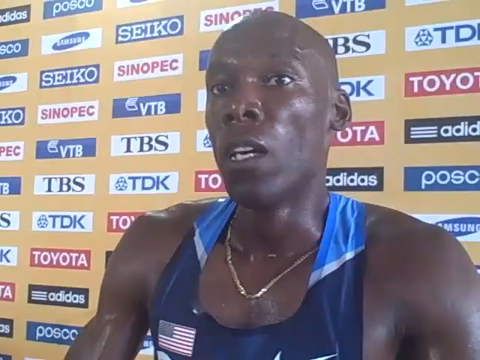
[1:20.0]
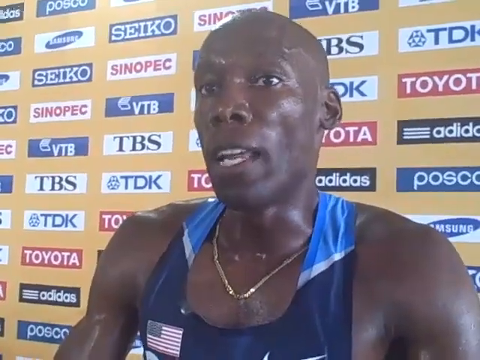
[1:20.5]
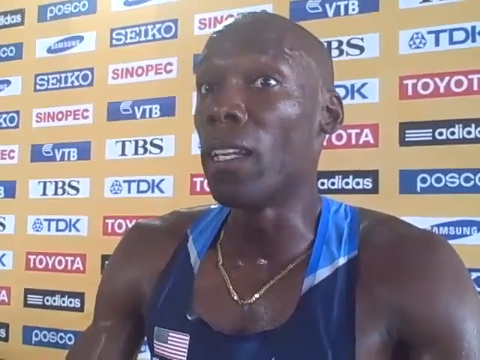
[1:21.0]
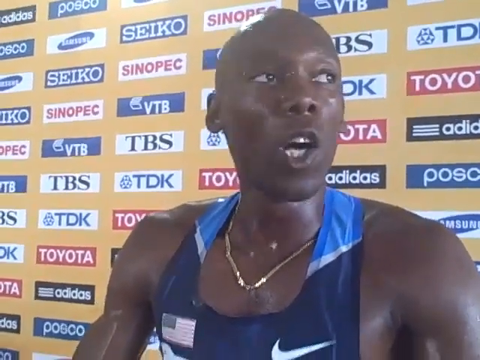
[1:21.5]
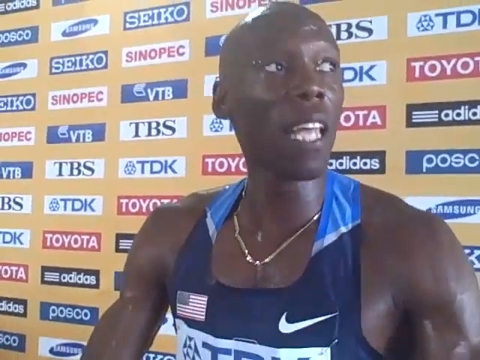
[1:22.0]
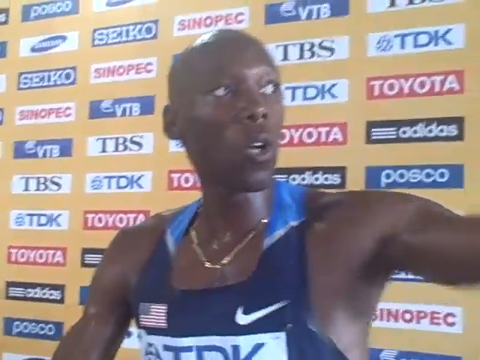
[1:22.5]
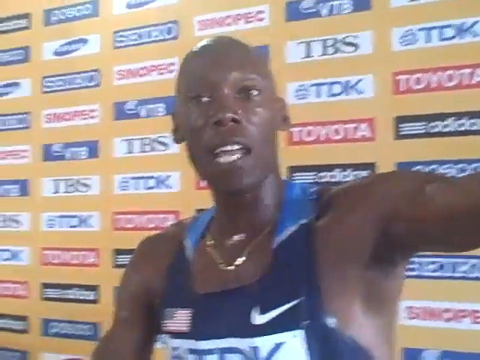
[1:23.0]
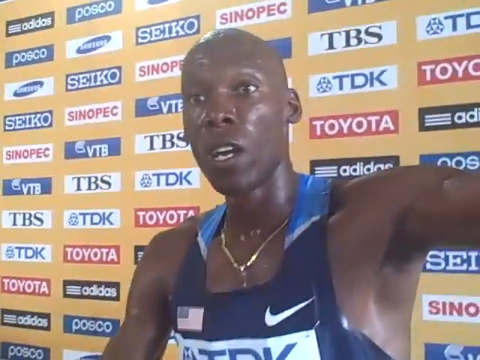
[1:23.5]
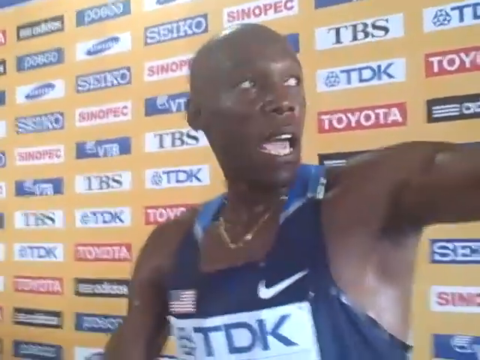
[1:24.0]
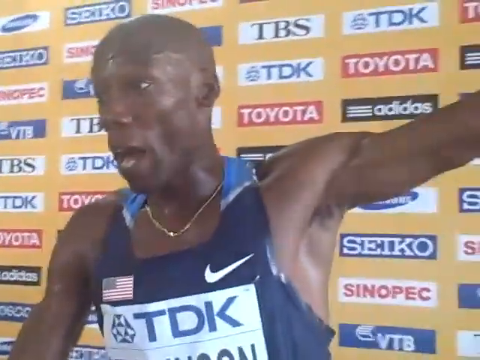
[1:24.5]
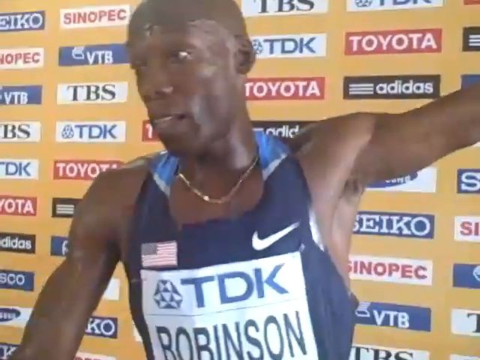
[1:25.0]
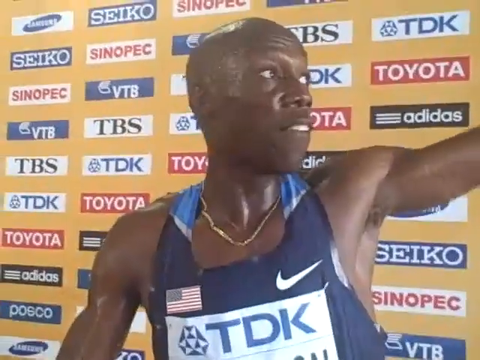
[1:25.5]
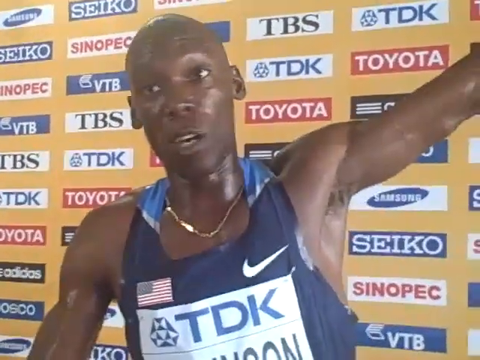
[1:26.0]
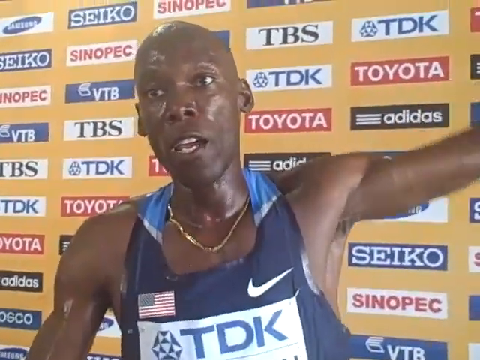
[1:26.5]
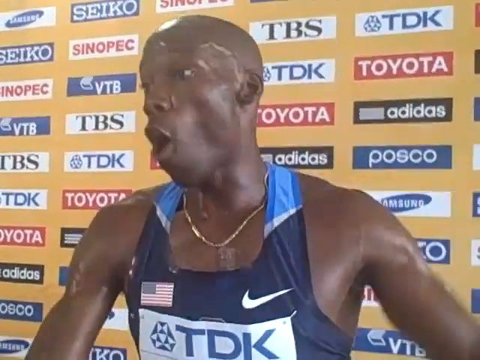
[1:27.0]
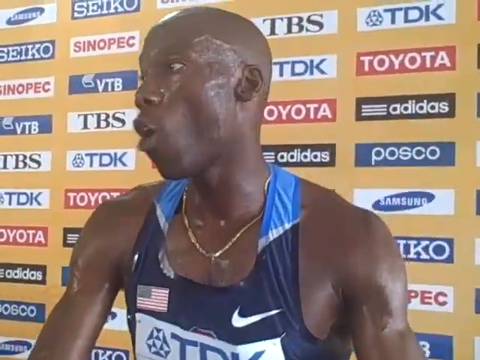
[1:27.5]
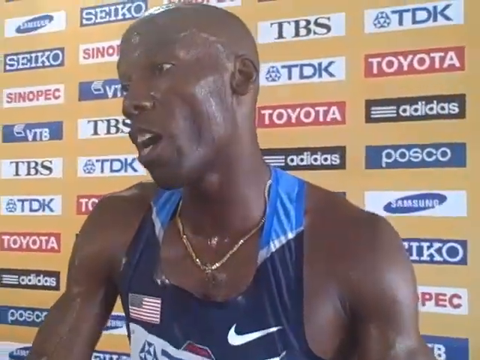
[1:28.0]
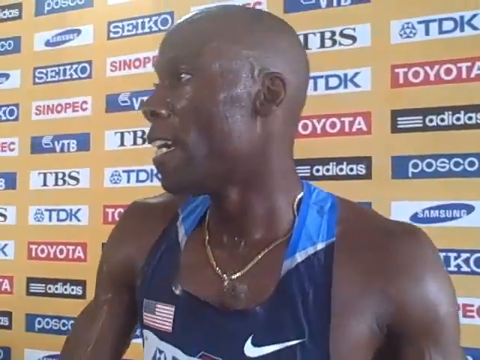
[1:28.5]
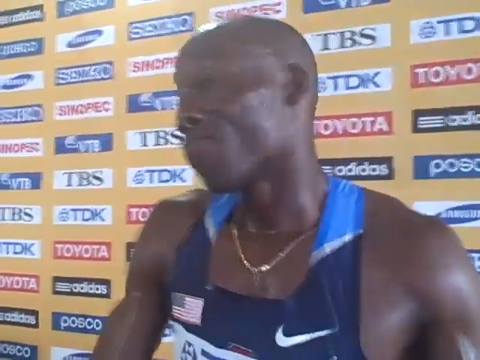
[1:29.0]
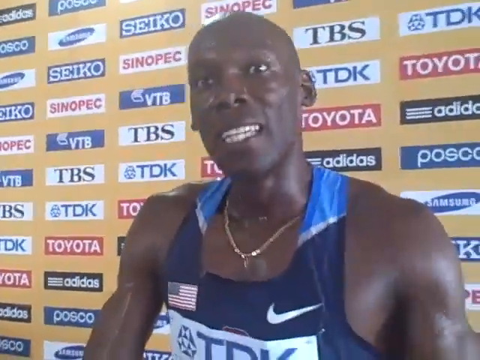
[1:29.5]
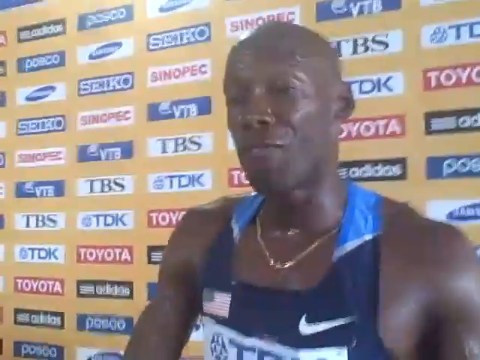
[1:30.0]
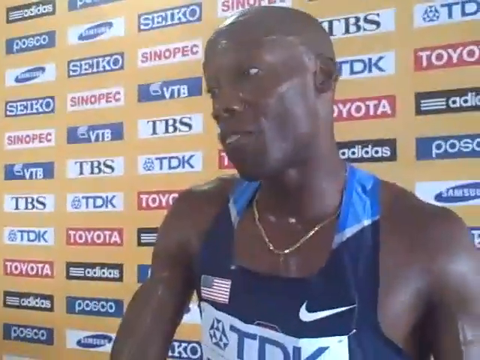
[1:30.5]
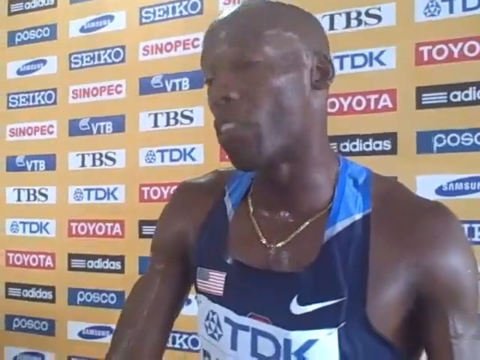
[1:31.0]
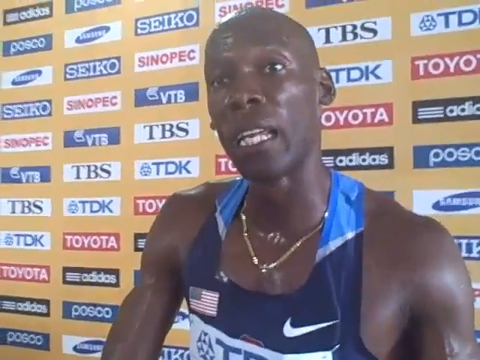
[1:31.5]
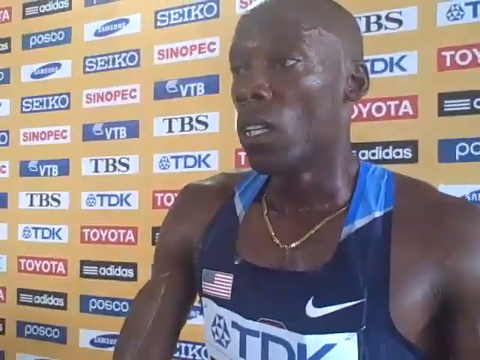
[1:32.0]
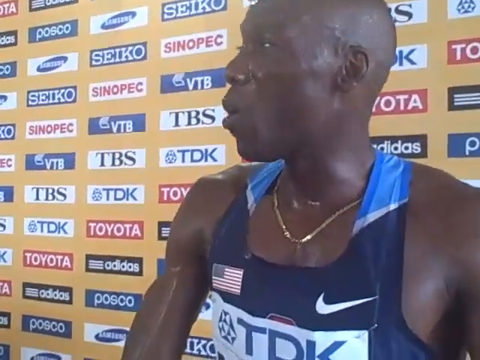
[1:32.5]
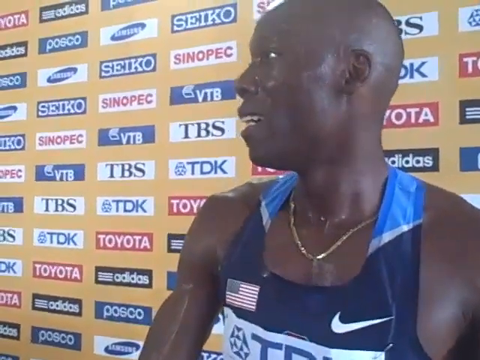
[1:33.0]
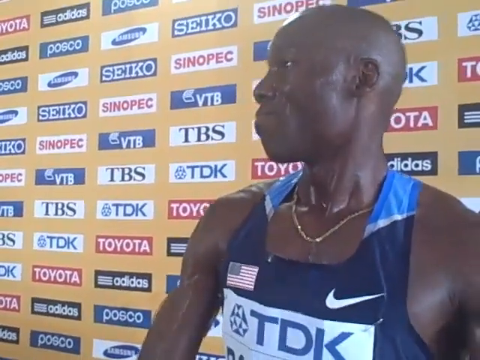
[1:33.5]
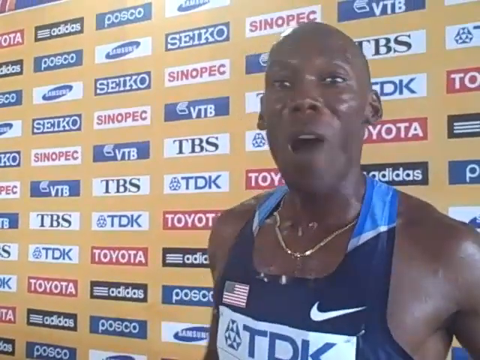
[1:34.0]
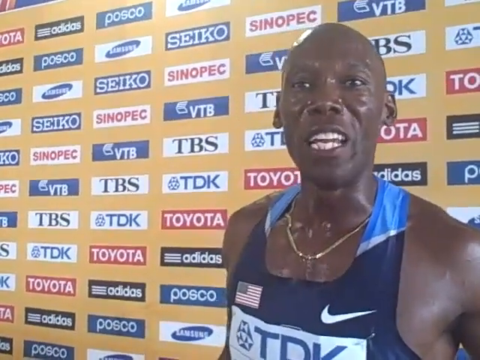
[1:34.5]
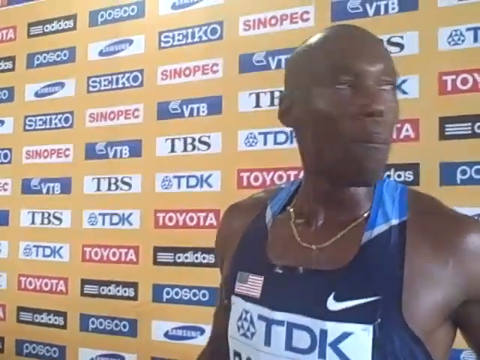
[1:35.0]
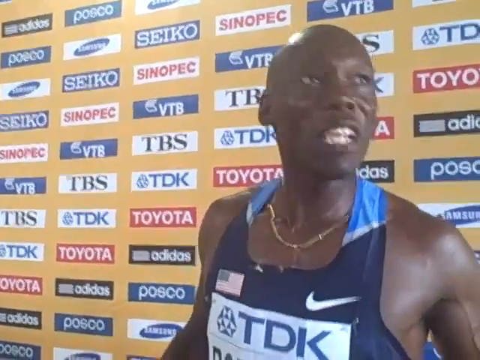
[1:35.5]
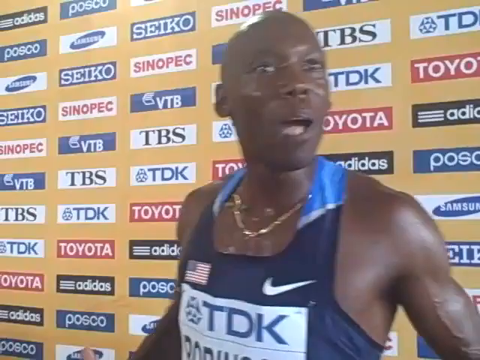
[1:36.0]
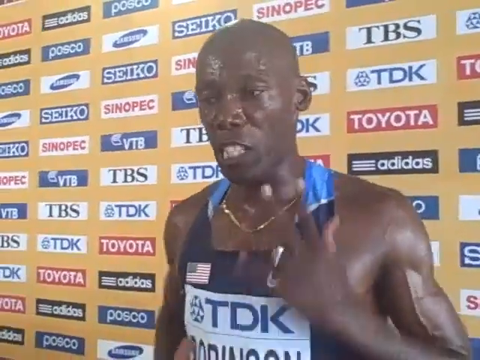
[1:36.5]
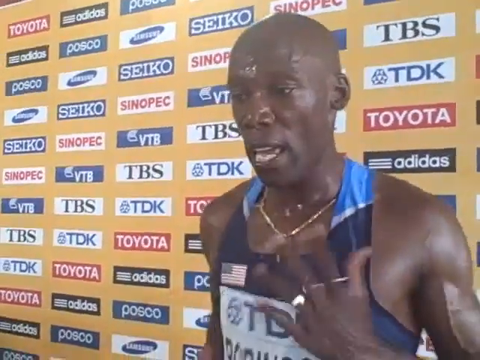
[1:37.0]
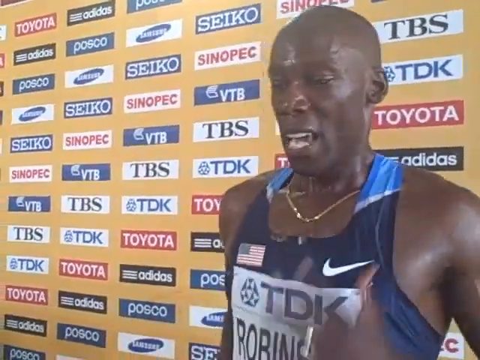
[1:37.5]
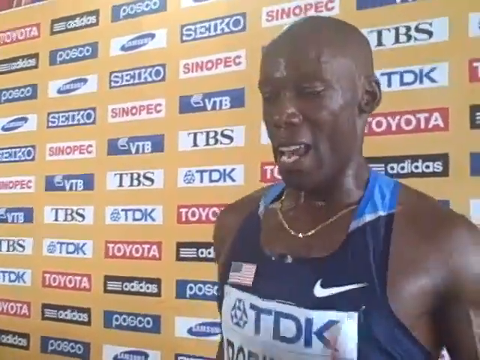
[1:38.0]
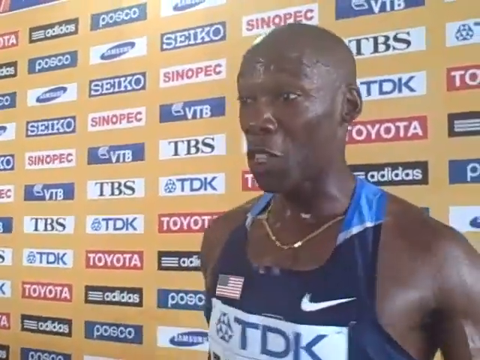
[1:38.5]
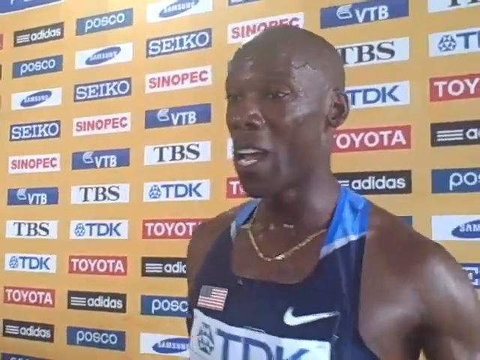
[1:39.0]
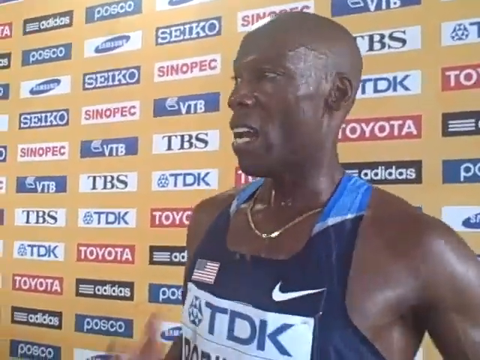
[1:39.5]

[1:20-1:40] He starts by looking at the interviewer, talking really quickly, in what looks like a very intense conversation; he sort of looks shocked and a little bit in disbelief. He uses his left arm to point towards his left side and looks that way, as if gesturing to a certain area, though what he refers to cannot be seen. As he puts his arm out, his armpits are visible, very sweaty and a slightly lighter color than the rest of his skin, with a little armpit hair. He looks very agitated as he points and raises his arm, sort of looking back and forth between the left side and the cameraman, his mouth moving dramatically as if he is a little bit angry or emotional. At the very end he seems very fed up and starts moving his arms around him as if speedwalking.